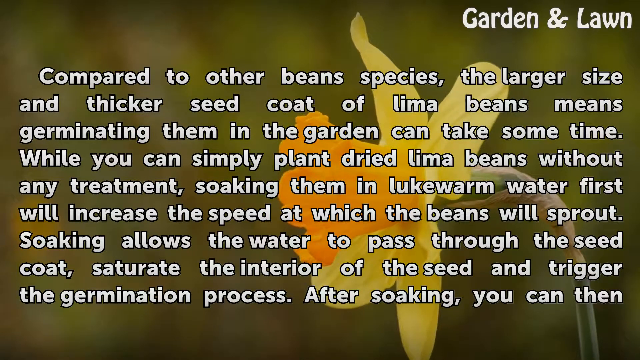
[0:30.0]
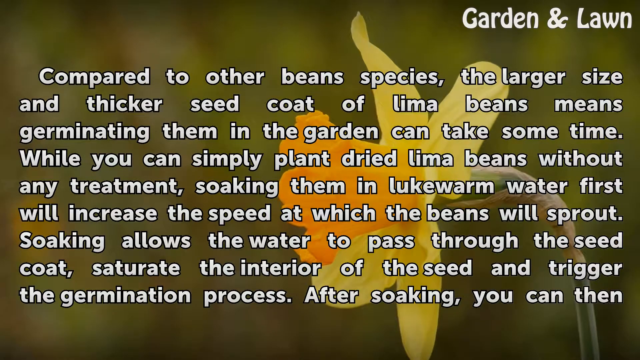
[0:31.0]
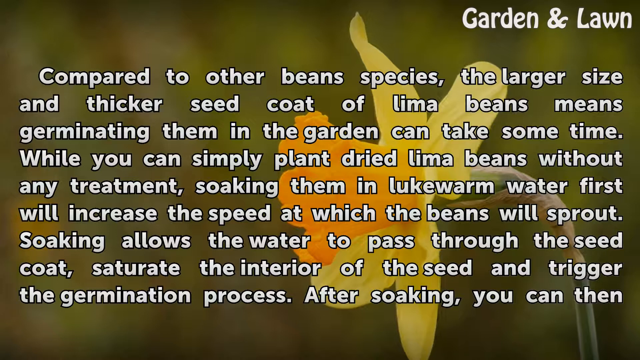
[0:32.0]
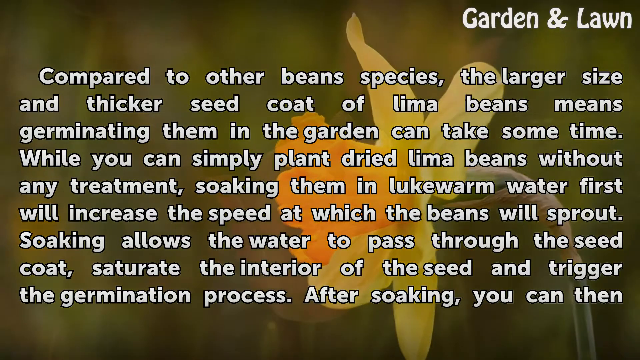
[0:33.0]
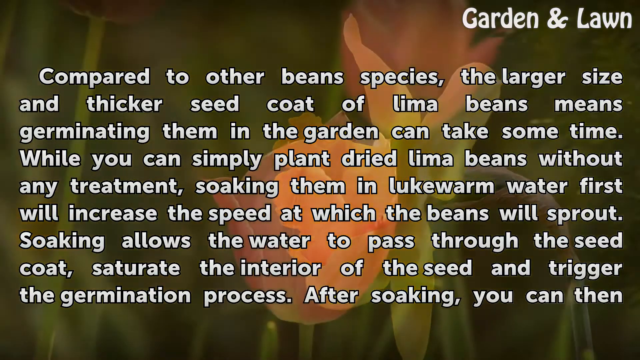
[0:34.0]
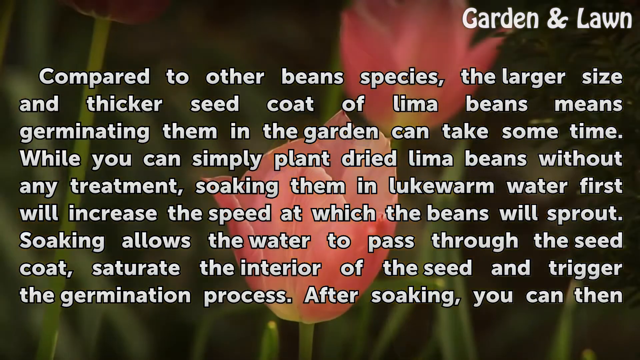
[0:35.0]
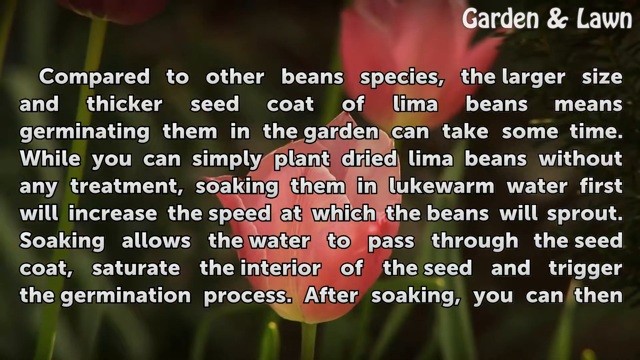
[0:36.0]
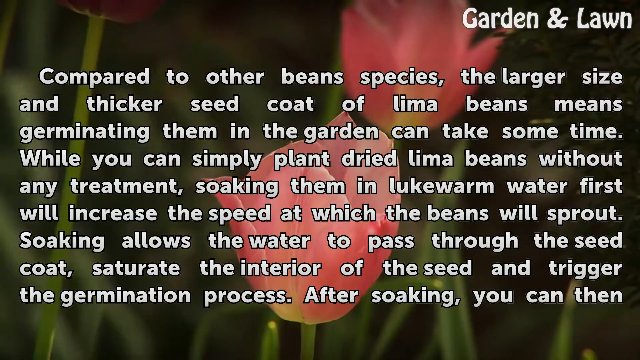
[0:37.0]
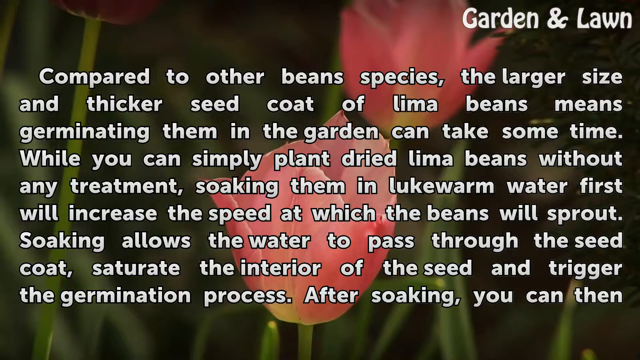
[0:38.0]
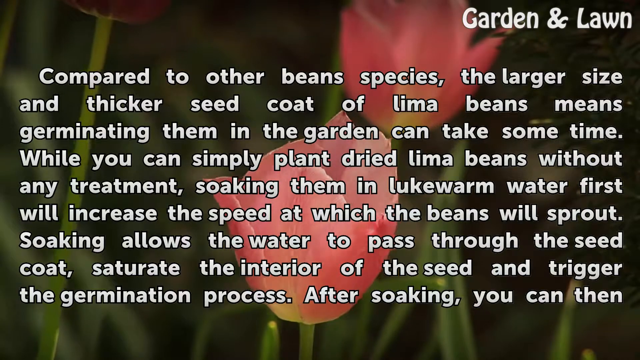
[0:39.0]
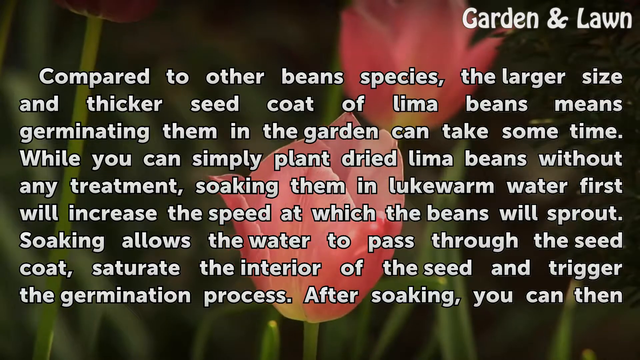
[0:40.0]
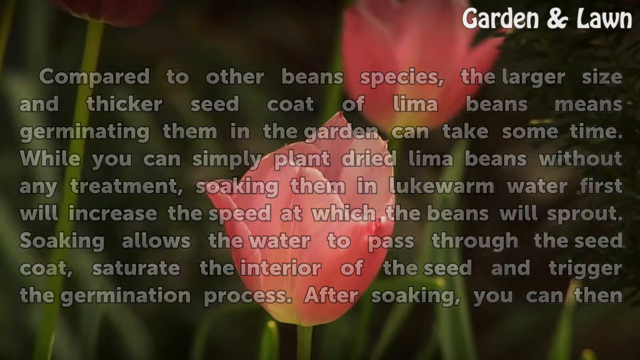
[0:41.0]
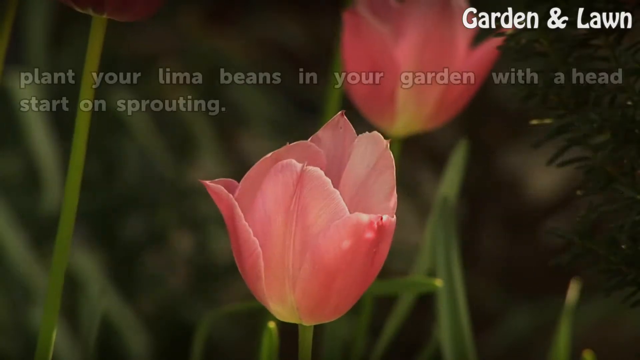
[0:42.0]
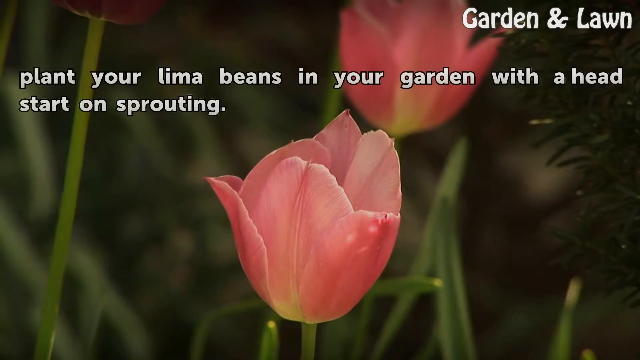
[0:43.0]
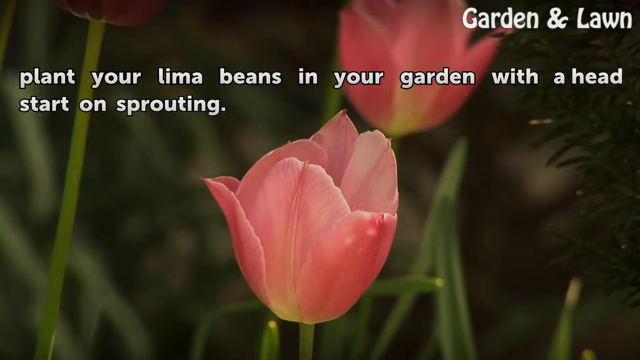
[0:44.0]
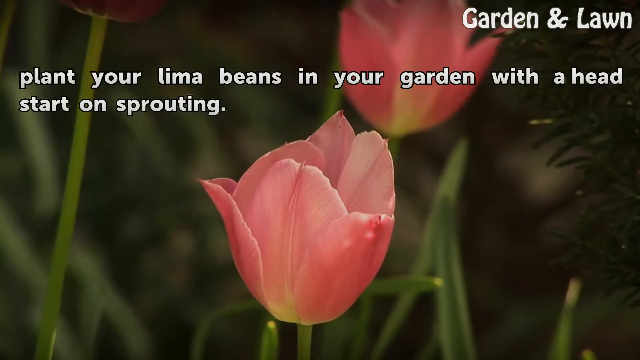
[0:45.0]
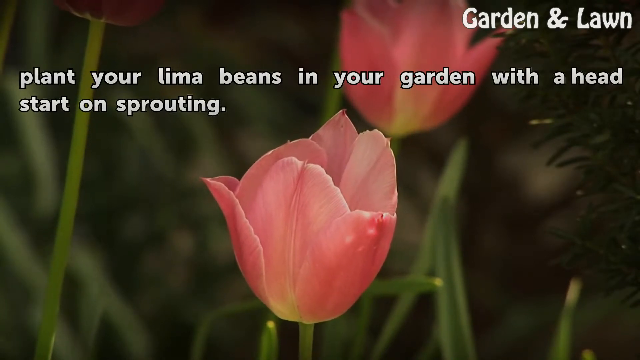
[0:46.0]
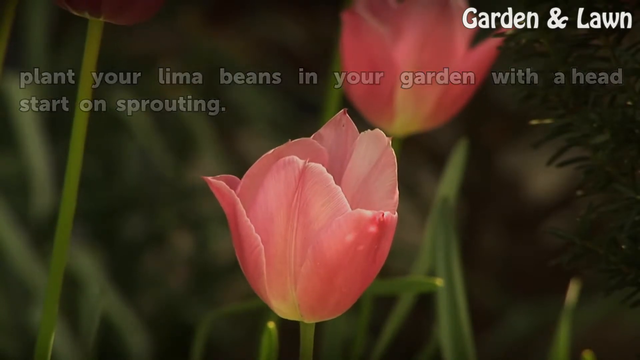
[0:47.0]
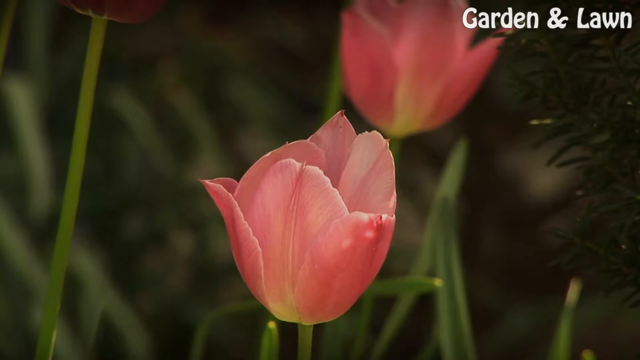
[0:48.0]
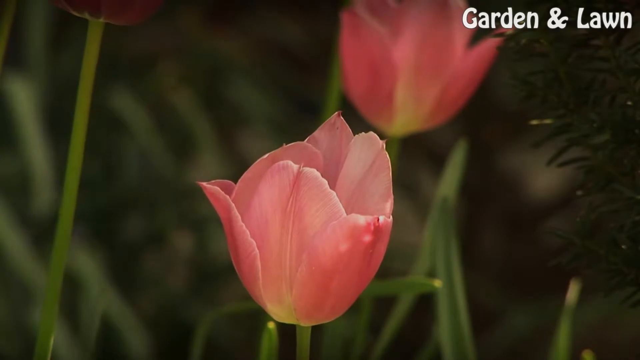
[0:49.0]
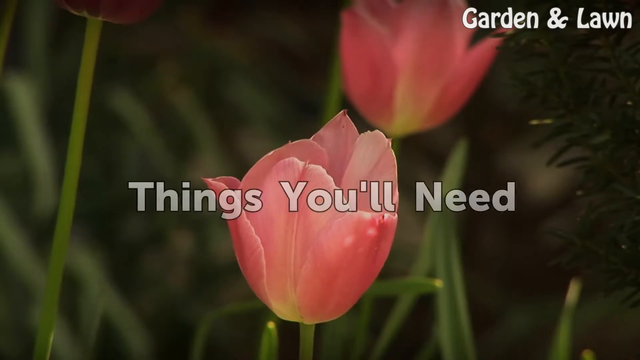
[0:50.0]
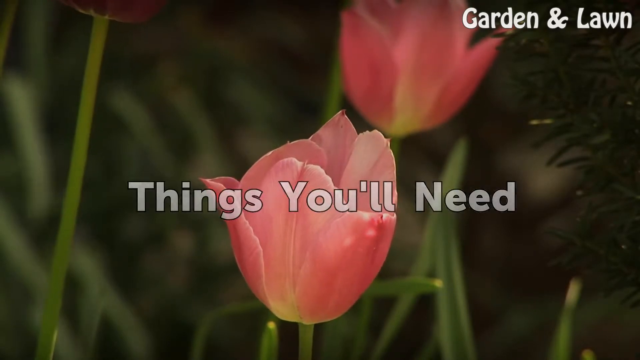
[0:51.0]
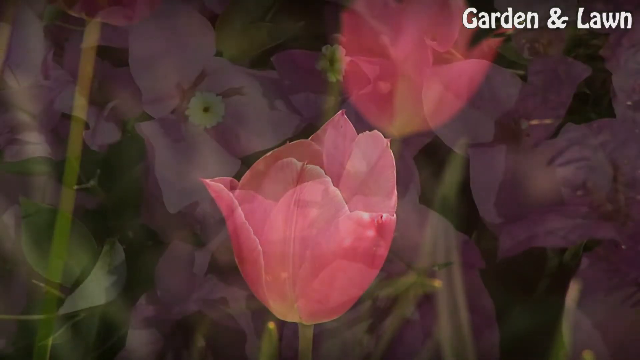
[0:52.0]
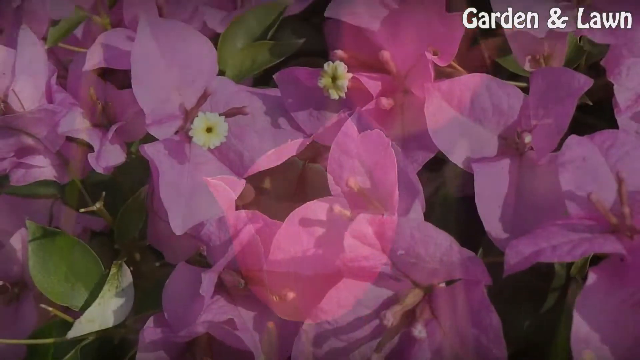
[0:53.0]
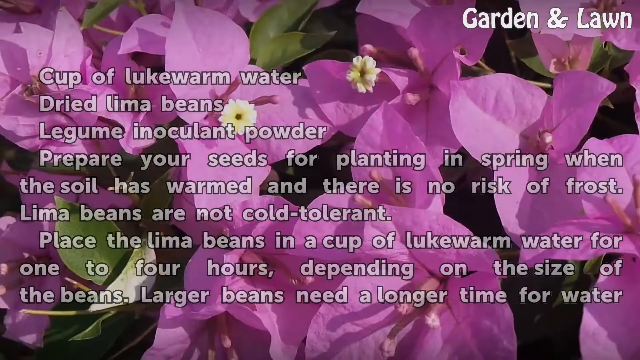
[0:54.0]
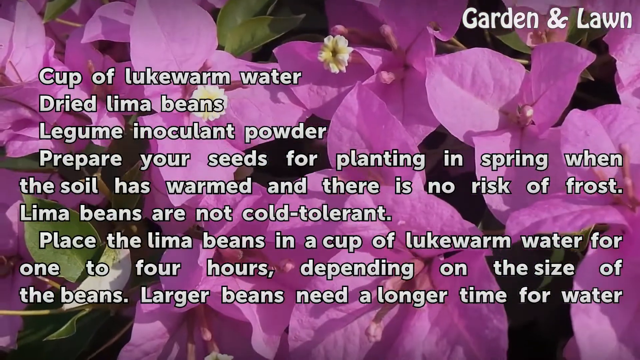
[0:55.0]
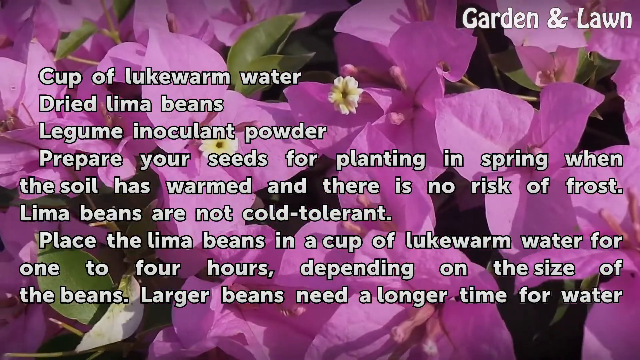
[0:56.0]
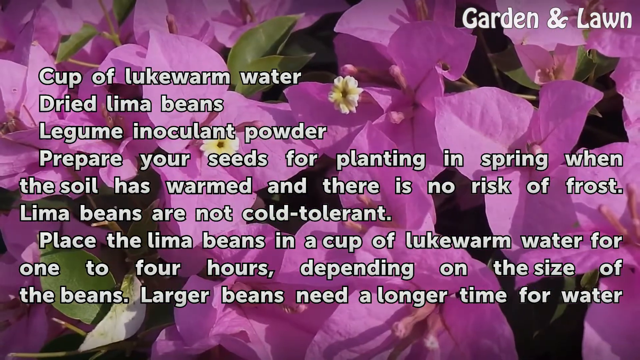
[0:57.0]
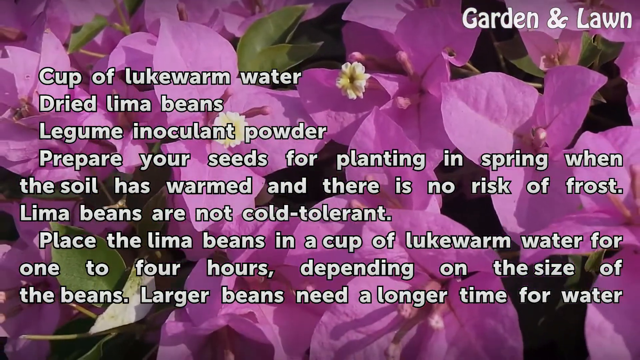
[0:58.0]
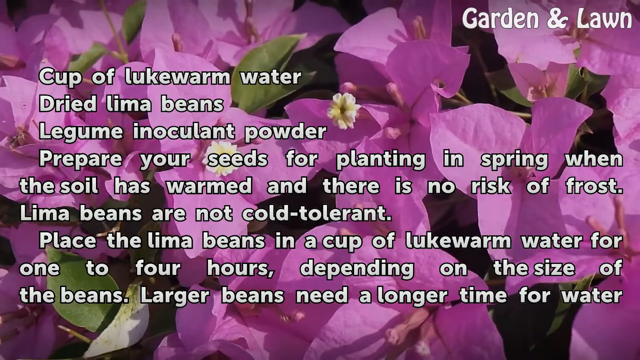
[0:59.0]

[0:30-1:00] Text about lima bean seeds and their thick coat continues, still in the garden and lawn section, with a background of flowers swaying gently in the breeze. The text offers a way to give lima bean seeds a head start before planting them in the garden: a cup of warm water, some dried lima beans and some legume inoculant powder, which, mixed together and soaked, give the seeds a head start in the spring. In the background is a fuchsia many-petaled flower, with smaller white flowers interspersed among the pink ones. No other ads or messages about tools for deaf people appear.